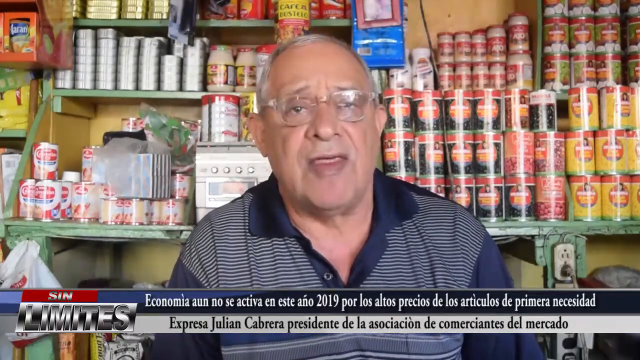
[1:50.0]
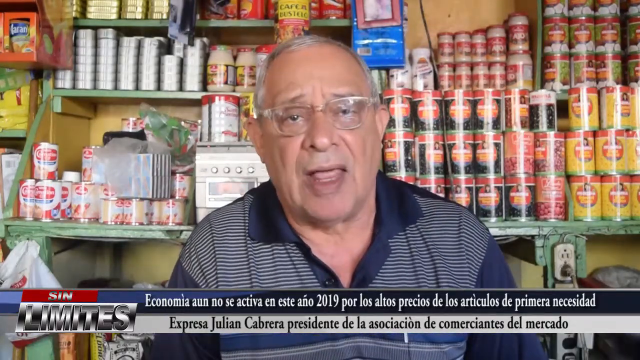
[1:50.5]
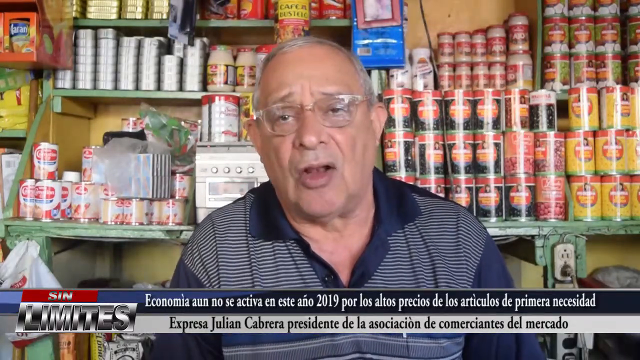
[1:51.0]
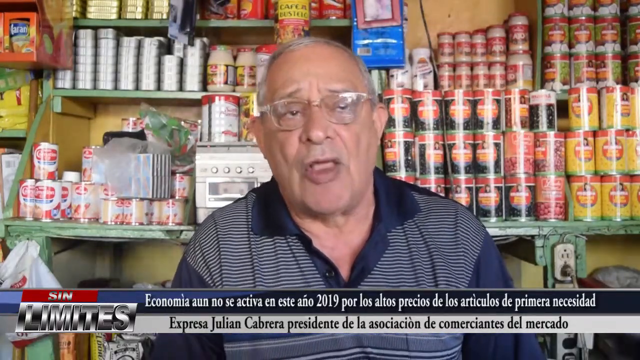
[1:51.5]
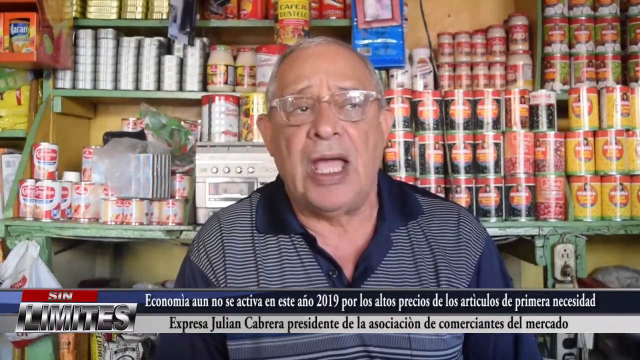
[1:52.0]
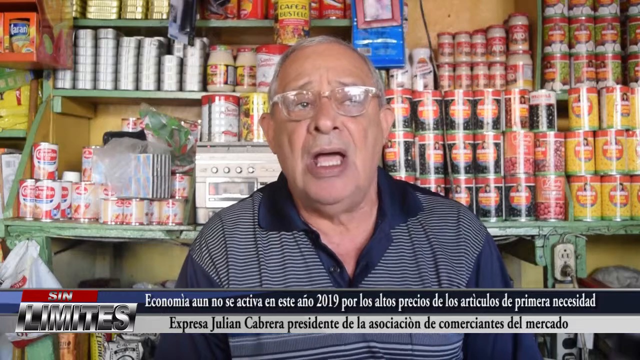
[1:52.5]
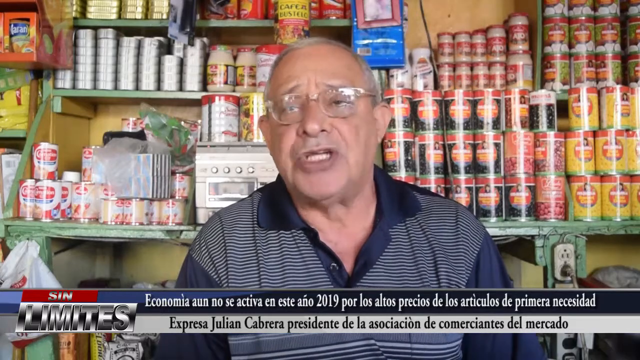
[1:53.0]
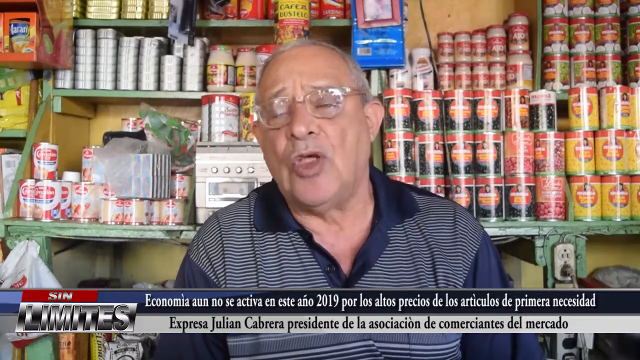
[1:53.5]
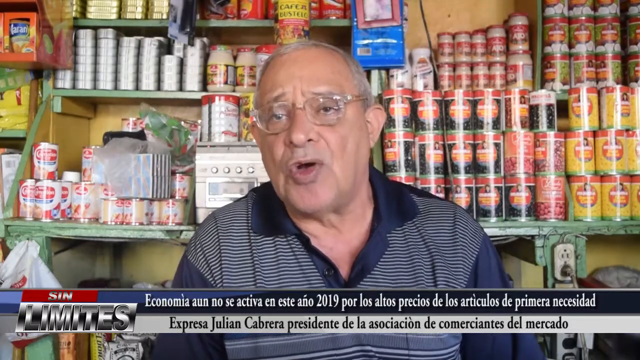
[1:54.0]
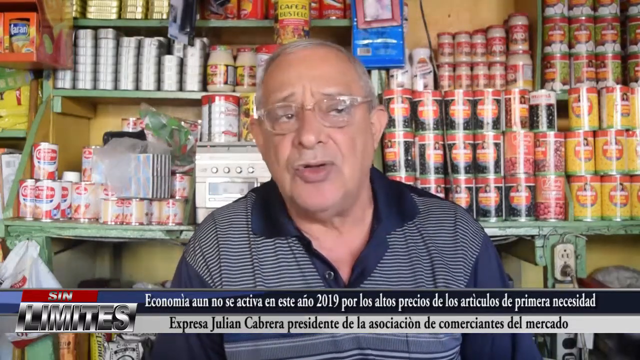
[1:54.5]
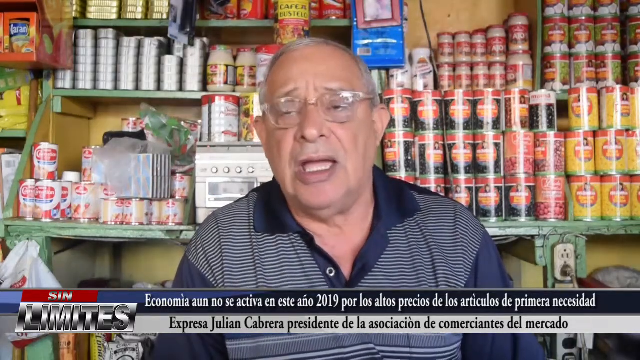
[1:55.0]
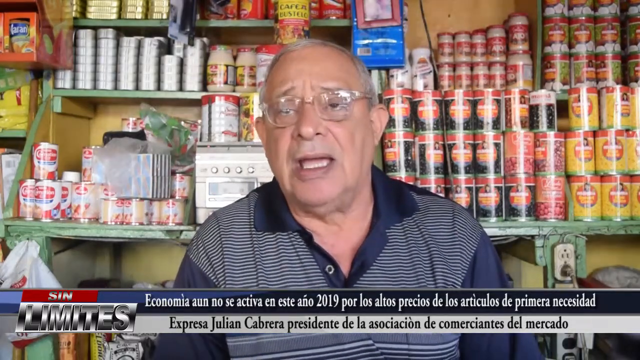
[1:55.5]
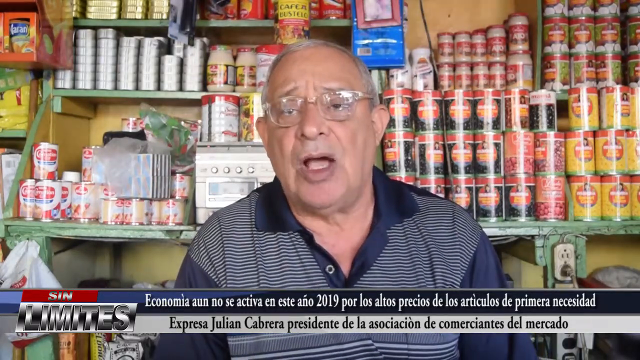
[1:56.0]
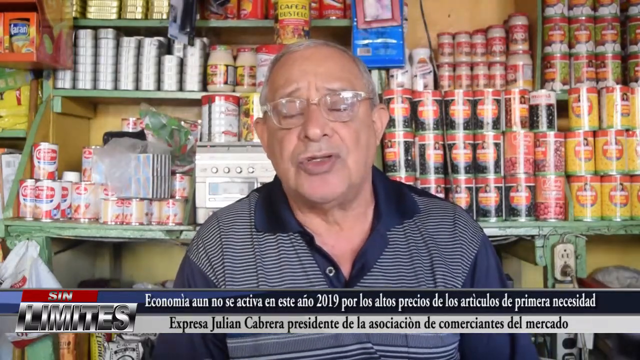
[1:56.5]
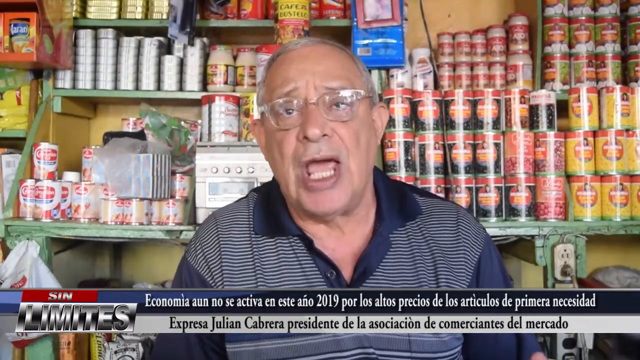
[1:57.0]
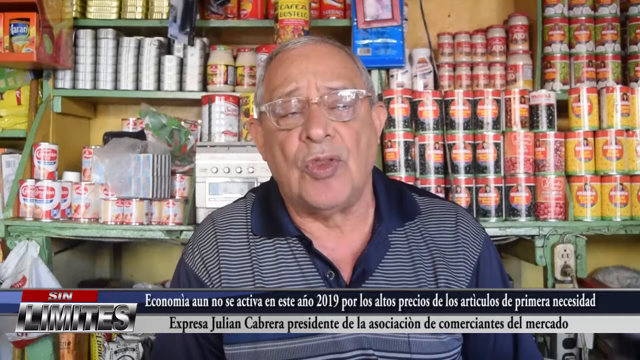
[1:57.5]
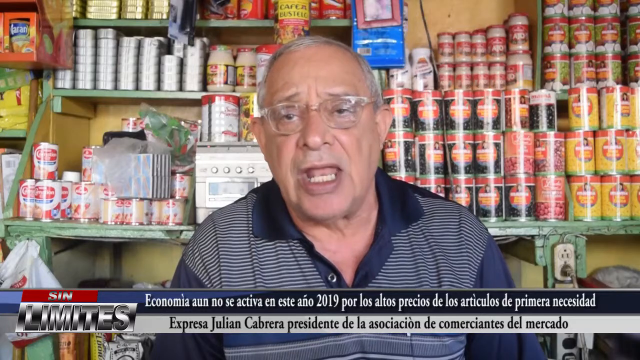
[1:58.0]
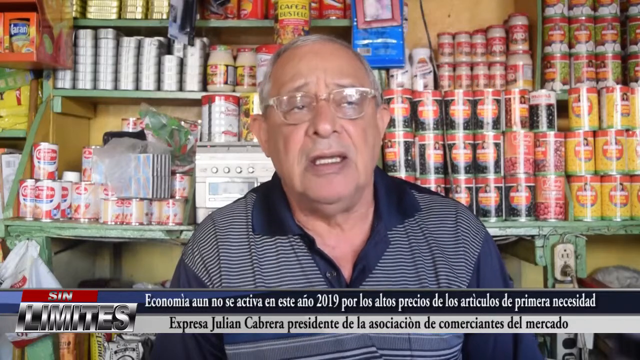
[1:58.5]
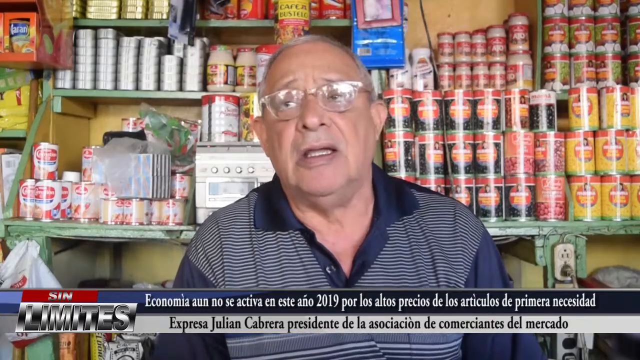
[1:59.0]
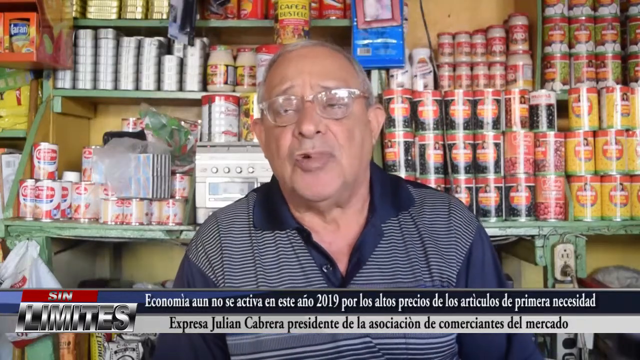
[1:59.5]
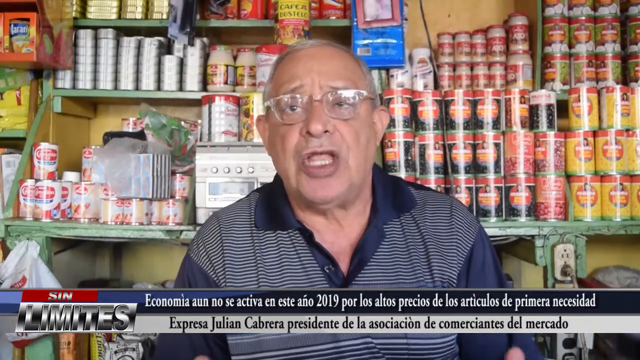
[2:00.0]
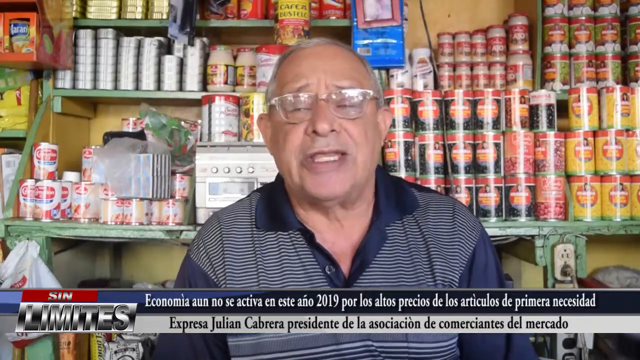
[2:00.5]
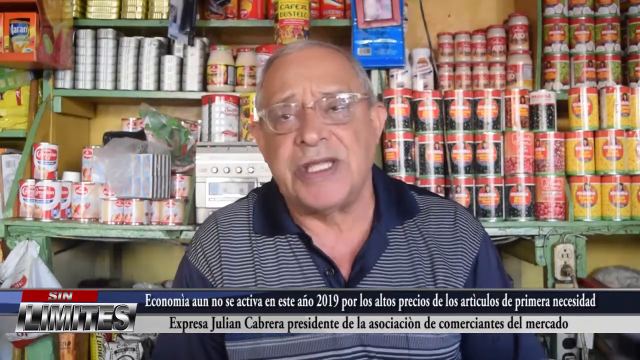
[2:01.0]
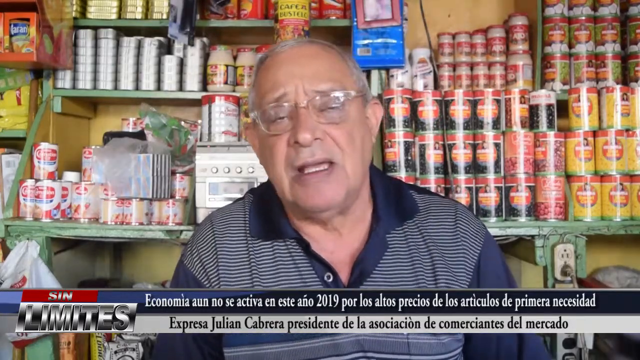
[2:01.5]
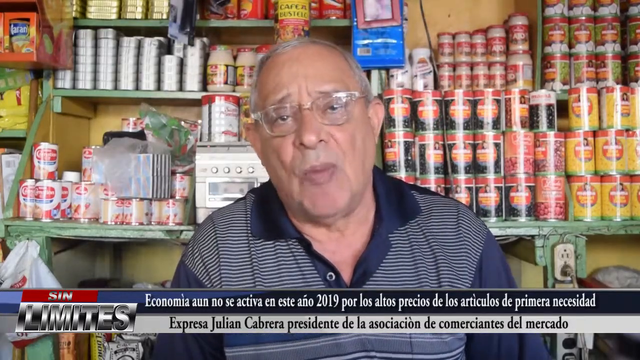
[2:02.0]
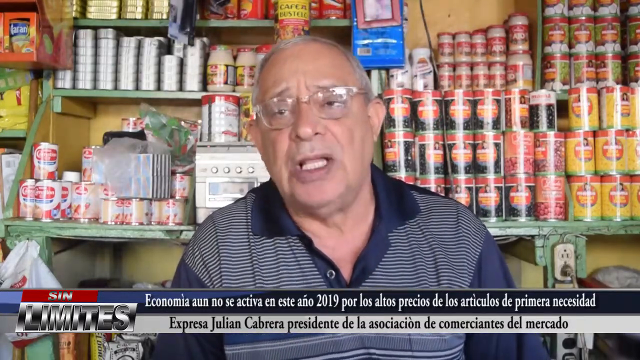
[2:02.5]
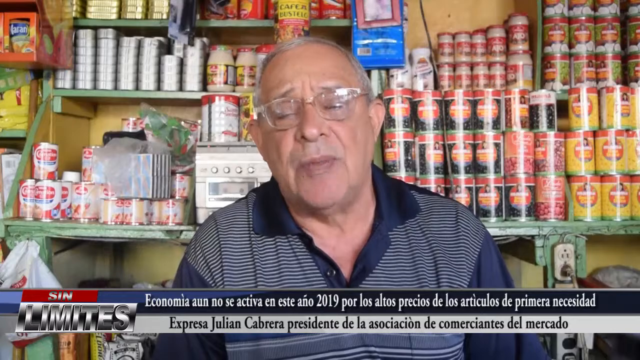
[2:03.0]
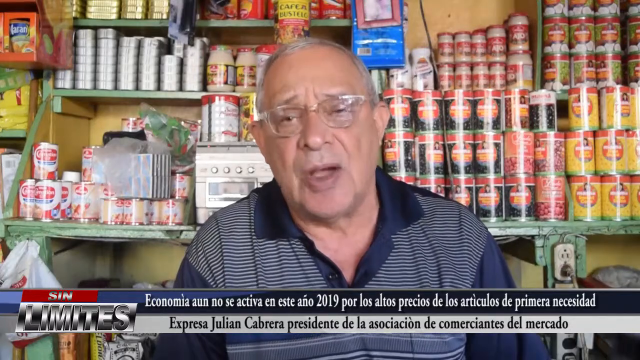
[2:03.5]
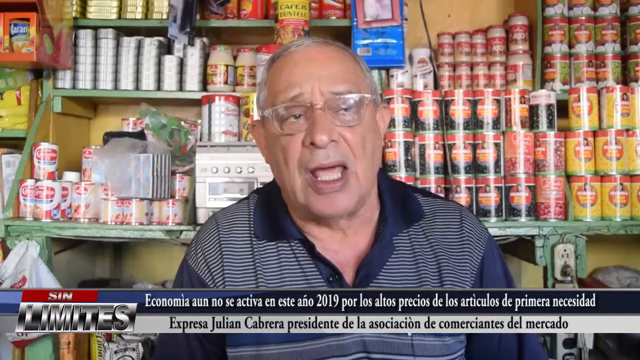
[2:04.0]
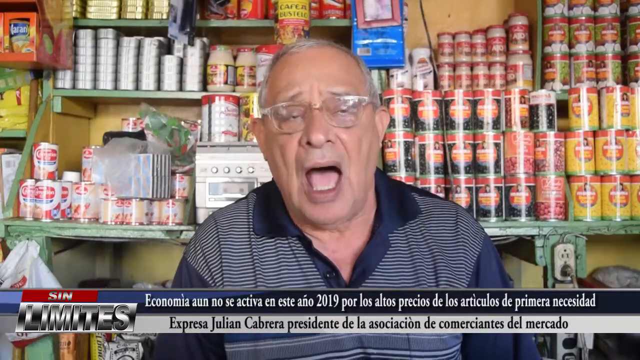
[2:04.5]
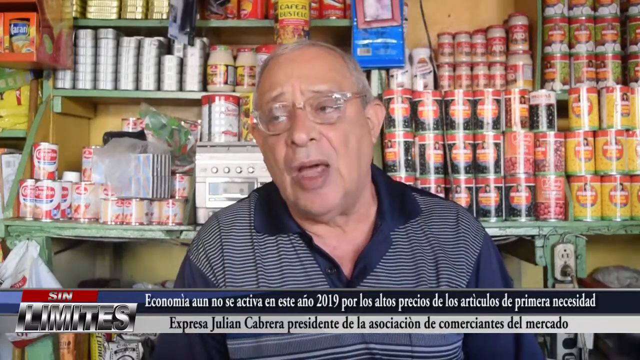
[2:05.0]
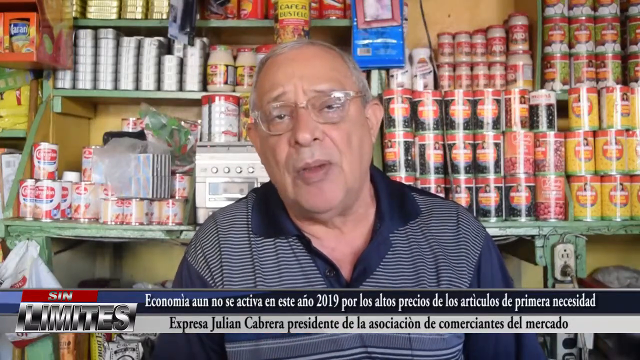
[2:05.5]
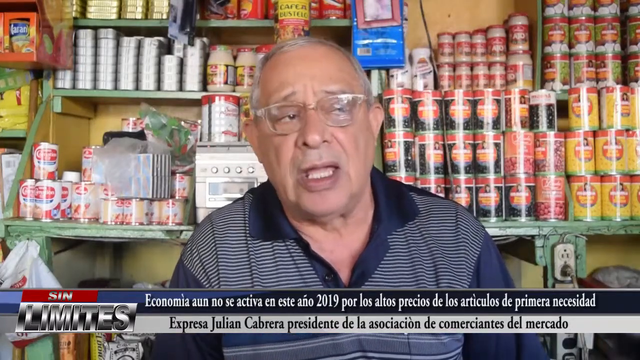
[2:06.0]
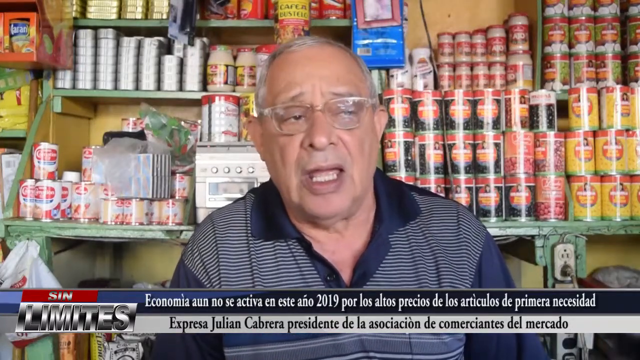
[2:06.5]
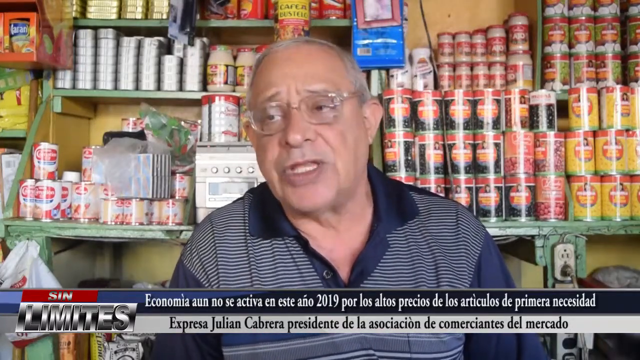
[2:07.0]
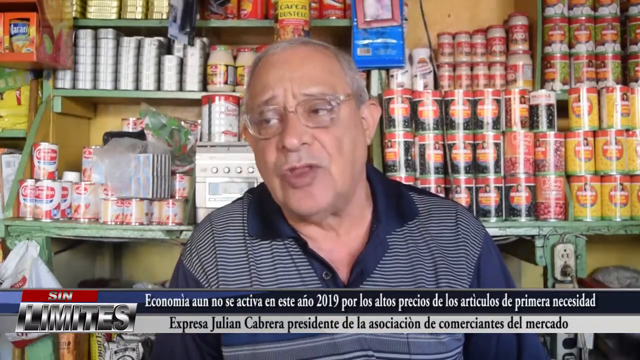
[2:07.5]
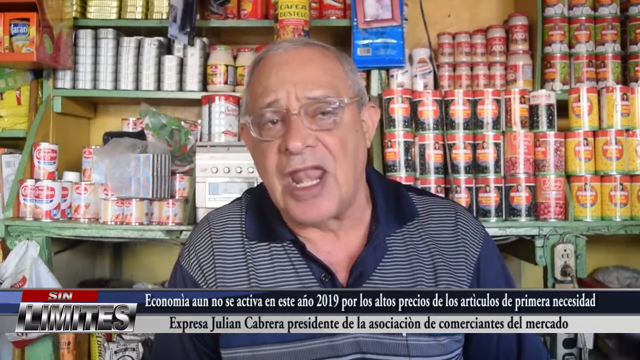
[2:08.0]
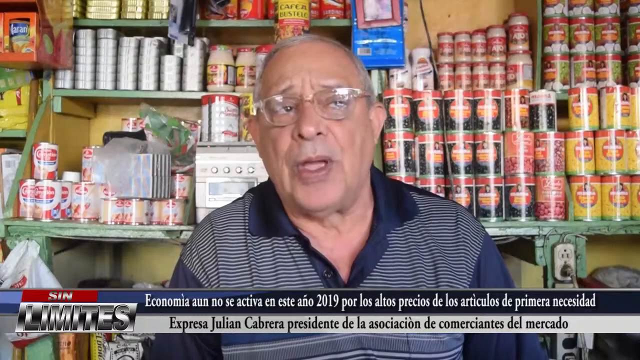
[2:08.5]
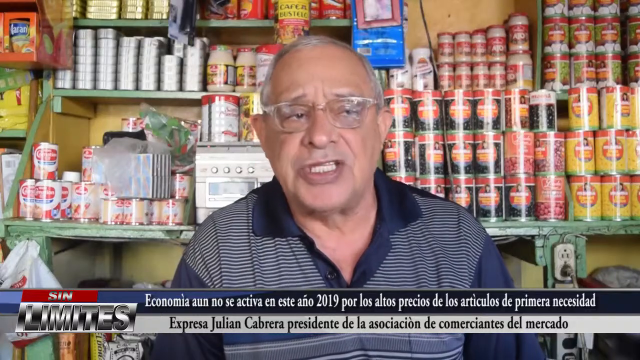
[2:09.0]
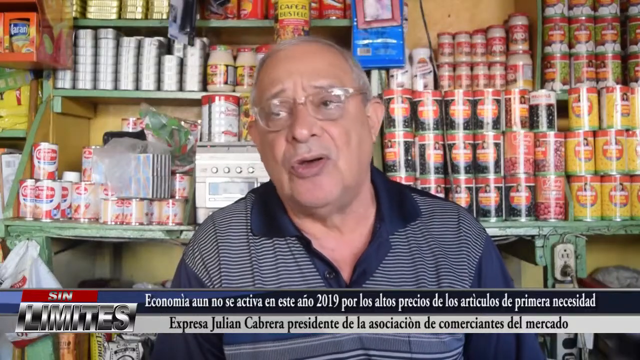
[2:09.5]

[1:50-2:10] A man is interviewed, sitting in front of green shelving, probably wooden, filled with all kinds of canned goods or spices. In the upper left corner there are possibly cans of sardines or some sort of fish, with shiny gold cans at the top; in the middle the cans are gray and shiny. To the left and right of the man there appear to be cans of beans, cans of corn and possibly cans of sweet peas.